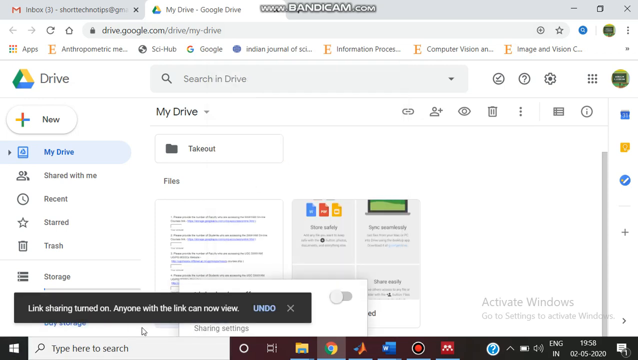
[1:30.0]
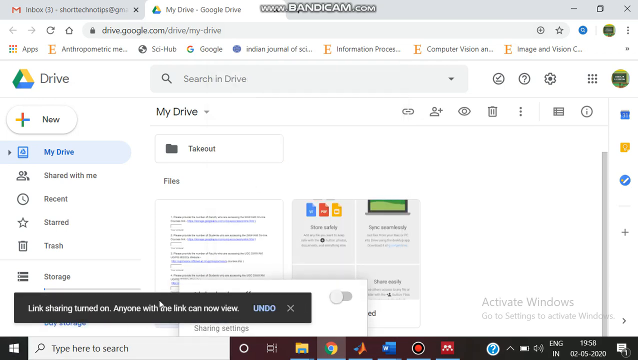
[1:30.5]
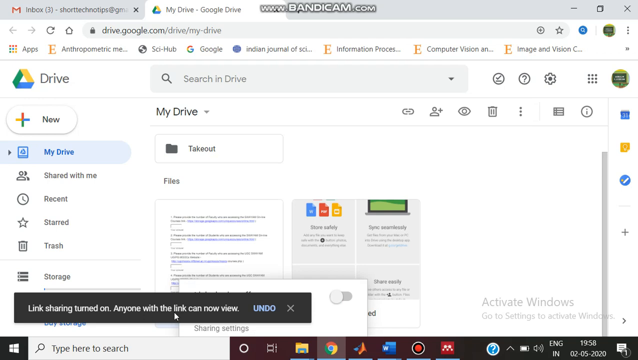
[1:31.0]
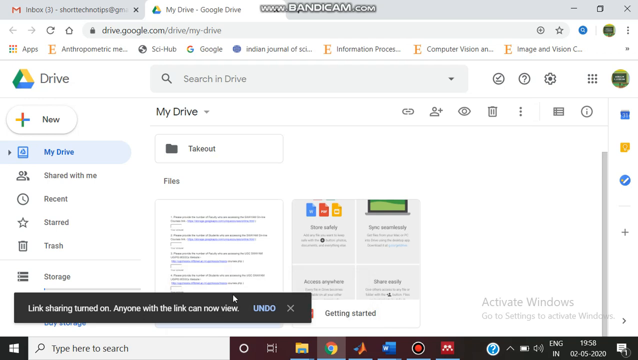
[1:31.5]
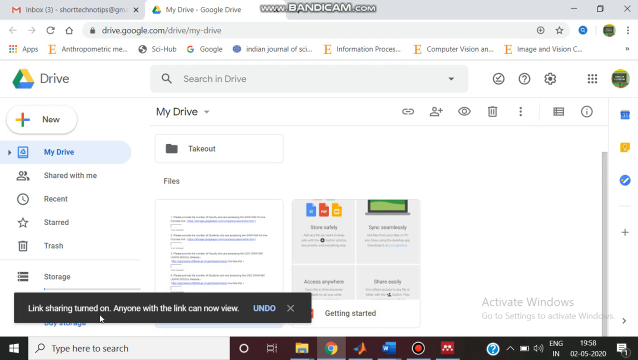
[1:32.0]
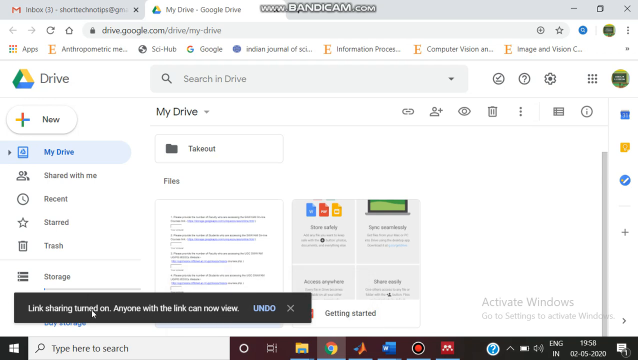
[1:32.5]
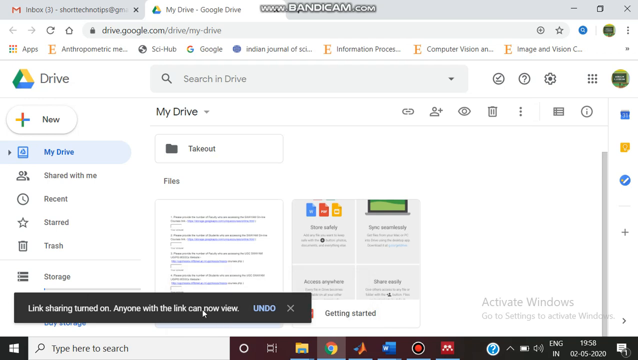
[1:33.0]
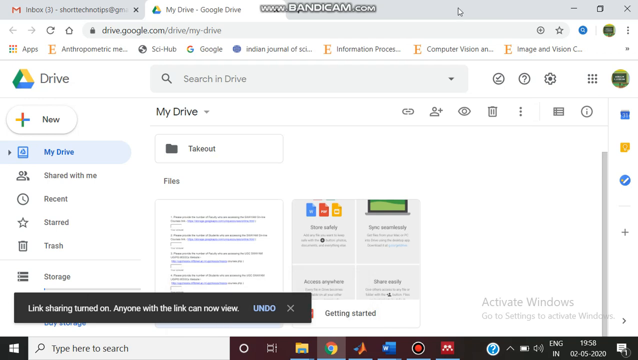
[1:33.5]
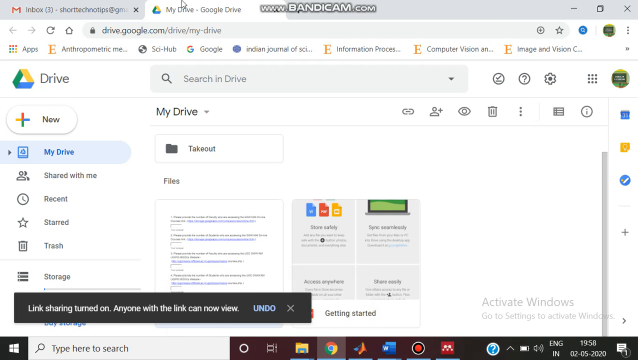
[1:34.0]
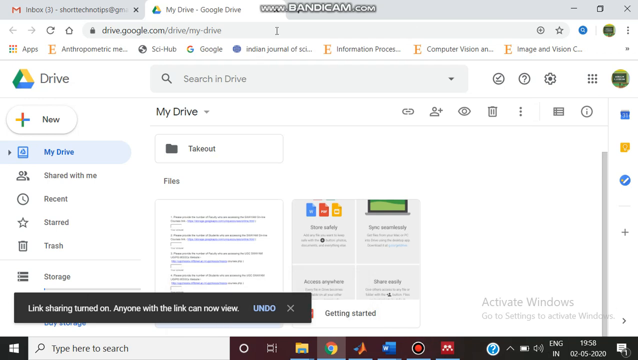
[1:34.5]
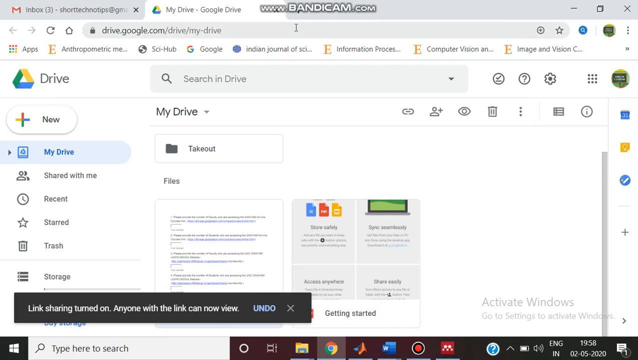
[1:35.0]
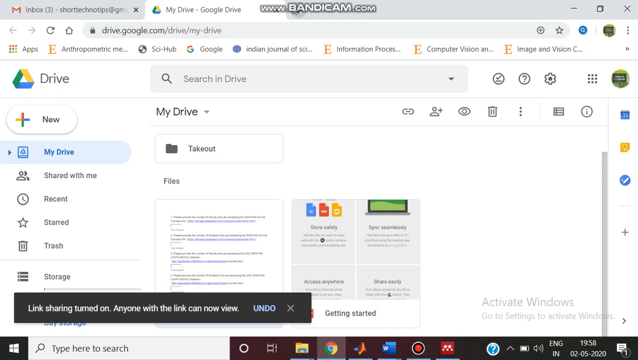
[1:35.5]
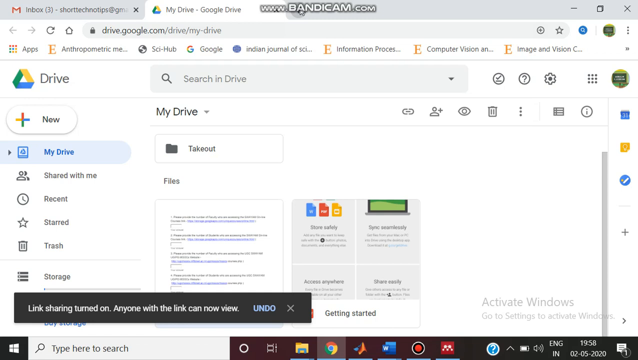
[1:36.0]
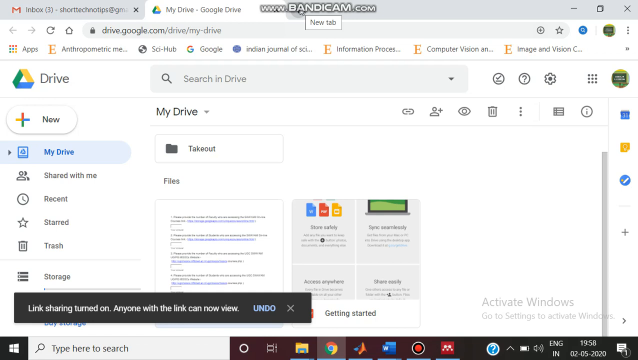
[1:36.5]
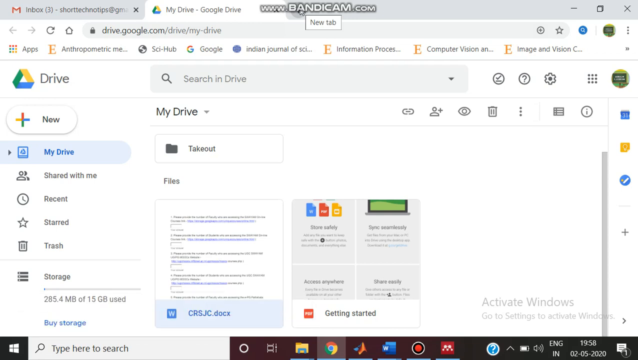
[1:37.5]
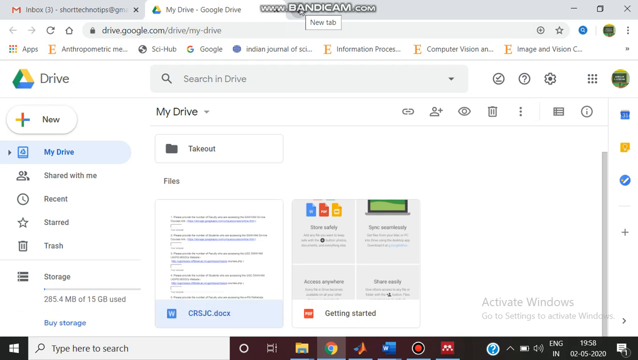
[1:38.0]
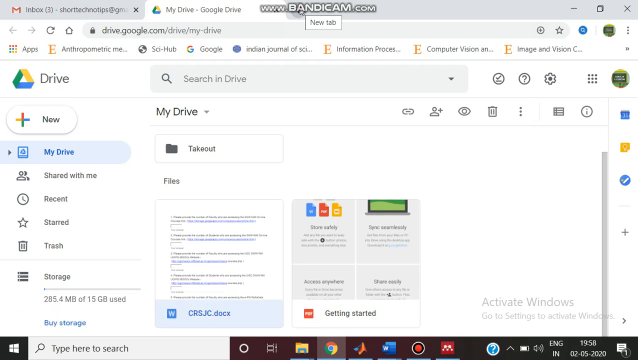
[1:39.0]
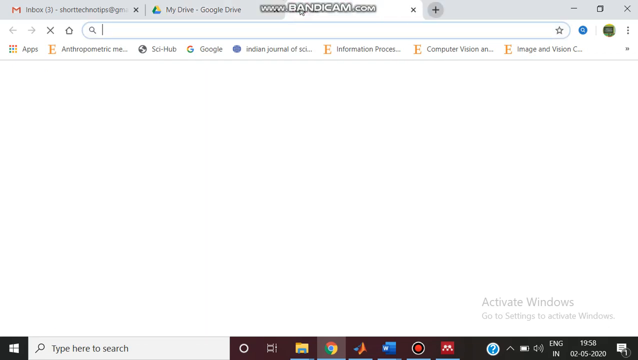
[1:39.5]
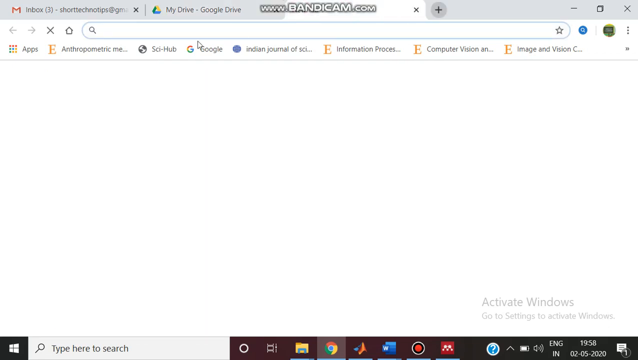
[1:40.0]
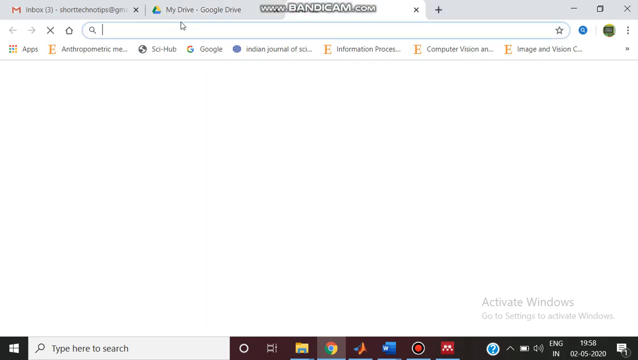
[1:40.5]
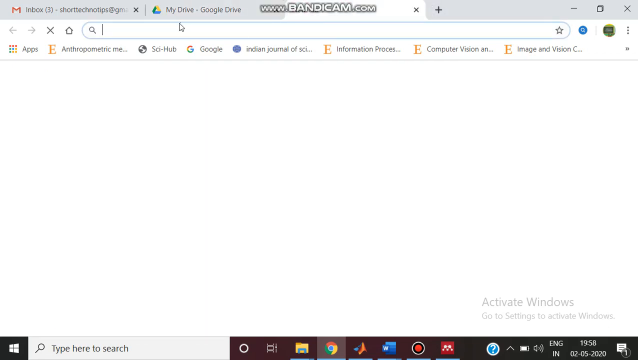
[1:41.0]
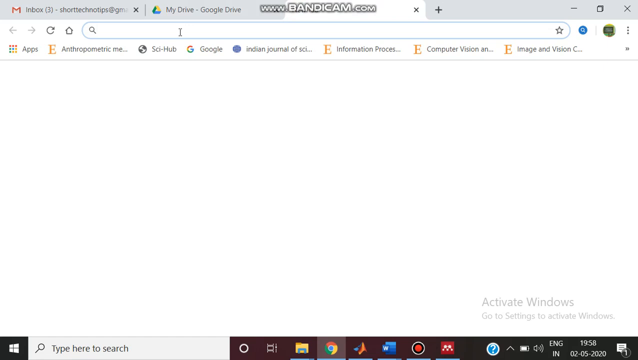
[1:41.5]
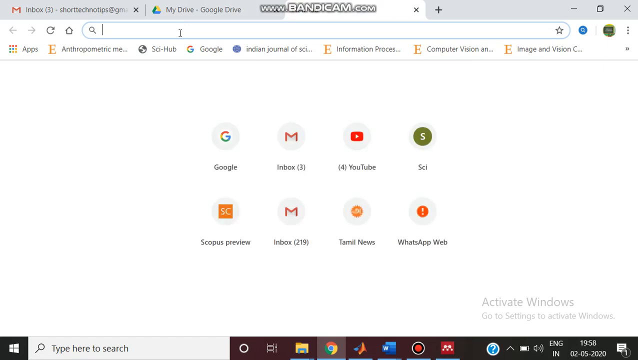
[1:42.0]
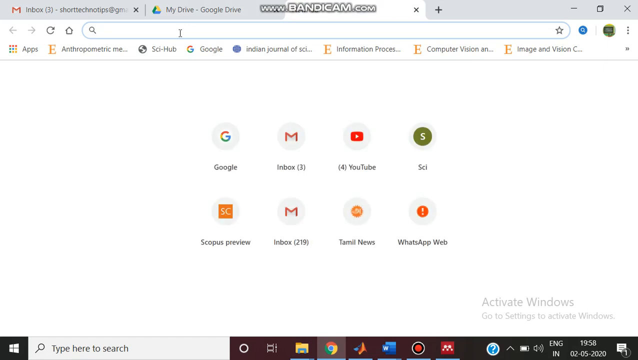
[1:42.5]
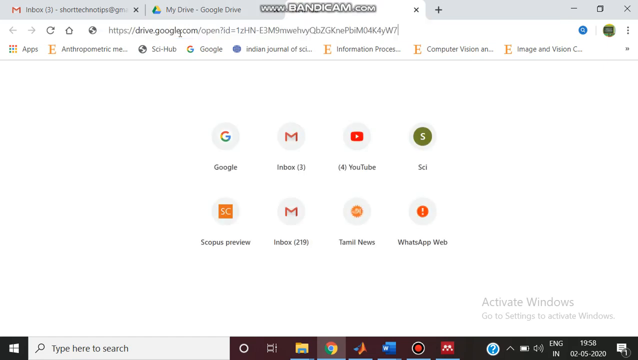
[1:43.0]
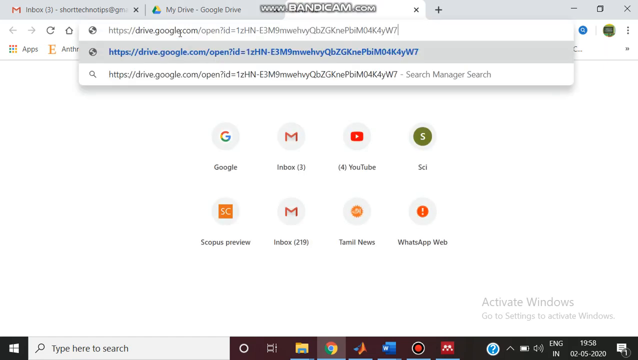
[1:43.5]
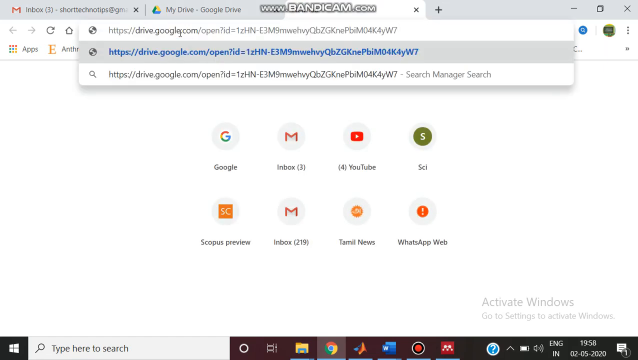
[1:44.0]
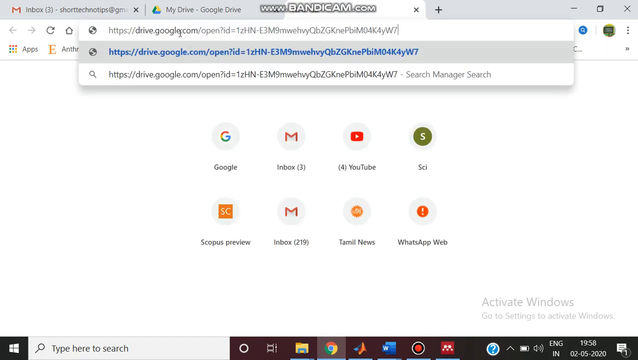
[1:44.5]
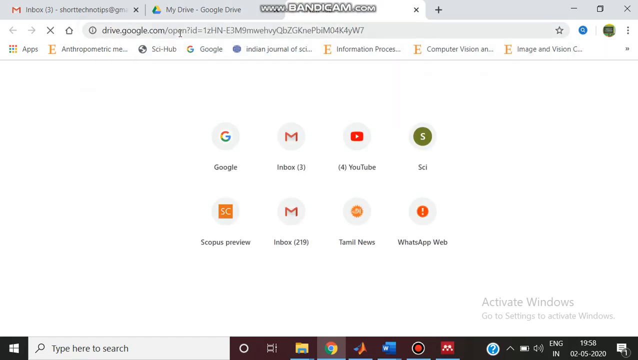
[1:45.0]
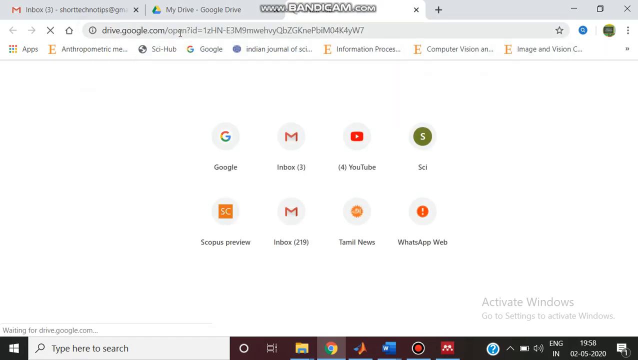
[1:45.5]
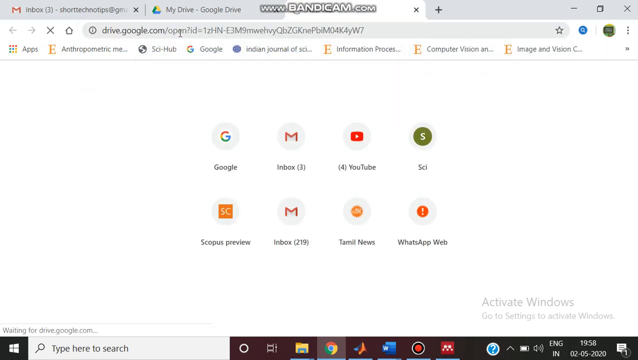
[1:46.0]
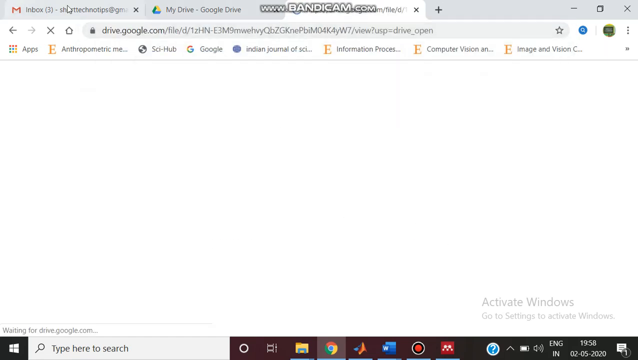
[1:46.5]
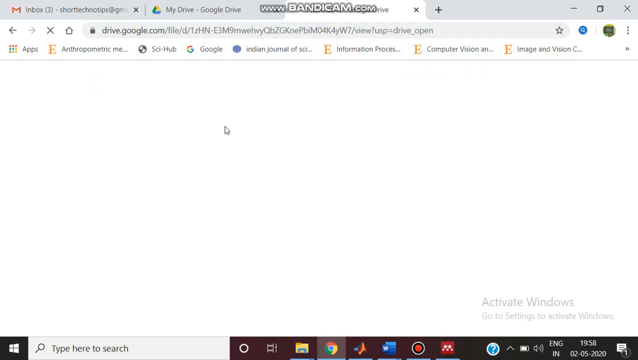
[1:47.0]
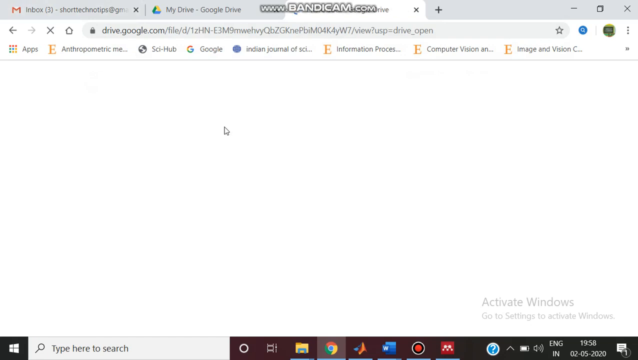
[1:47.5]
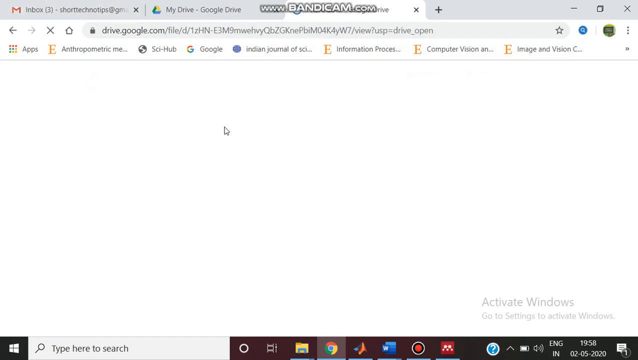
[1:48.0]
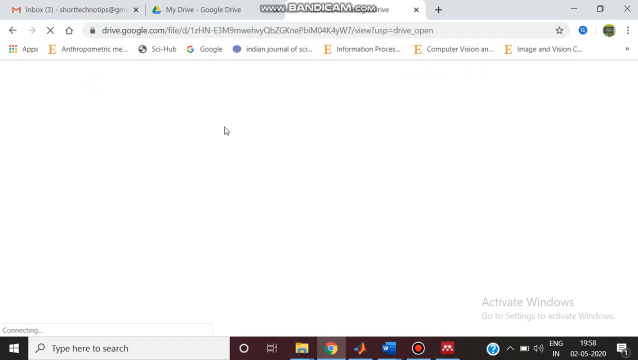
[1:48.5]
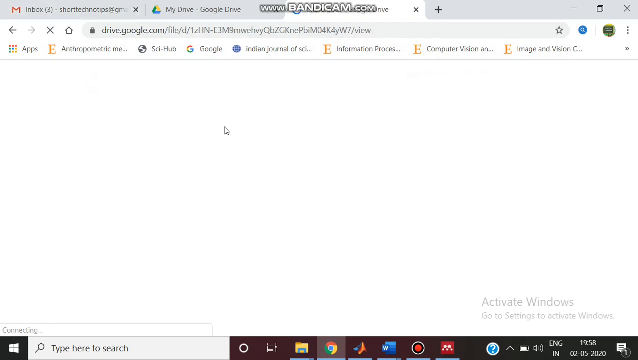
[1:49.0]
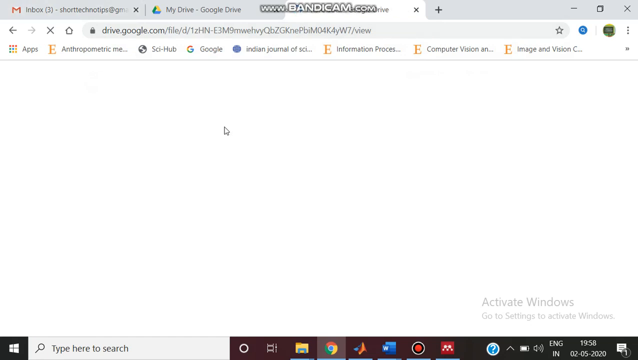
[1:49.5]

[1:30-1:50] Two tabs are open in Google Chrome on a Windows PC: Gmail, which is not visible, and My Drive in Google Drive, which is on screen. The address www.bandicam.com is at the top middle of the screen. A black pop-up box at the bottom of the page has white text reading "link sharing turned on, anyone with the link can now view", with an Undo option to the right and a close X. The cursor moves left to right several times, goes up to the top and opens a new tab, which opens with an address for Google Drive. The new tab has eight shortcuts: Google Chrome, Gmail, YouTube, Sci, Scopus Preview, another Gmail inbox, Tamil news and WhatsApp web. The cursor moves around the page, then the tab closes and the view returns to Google Drive.